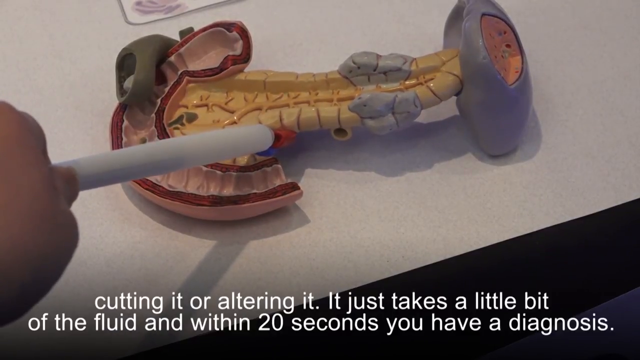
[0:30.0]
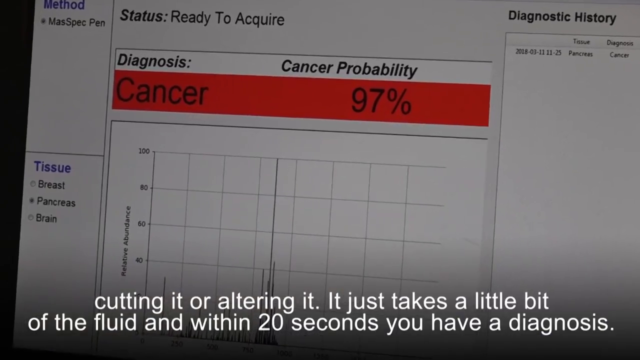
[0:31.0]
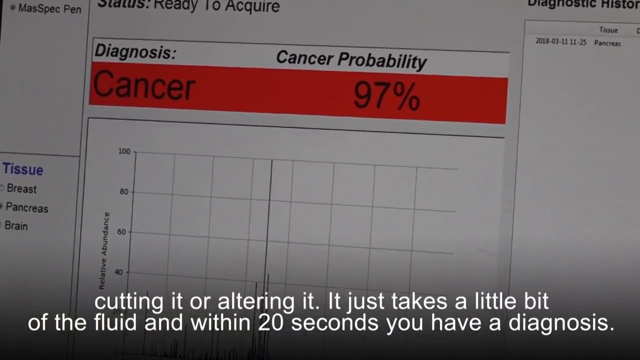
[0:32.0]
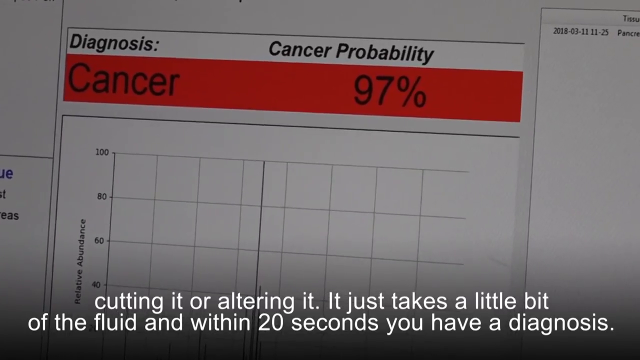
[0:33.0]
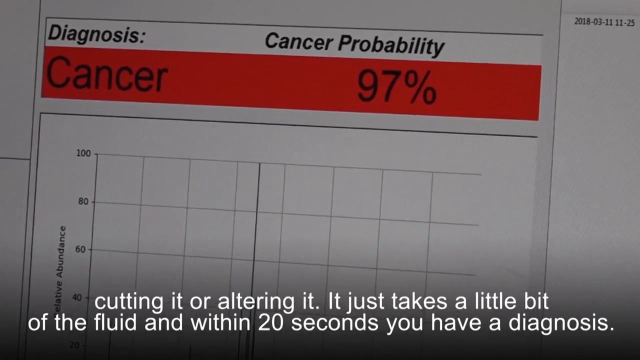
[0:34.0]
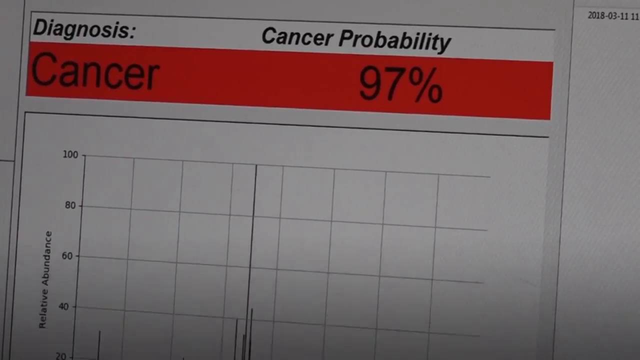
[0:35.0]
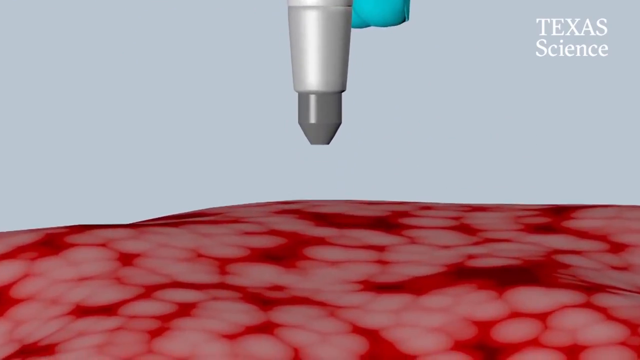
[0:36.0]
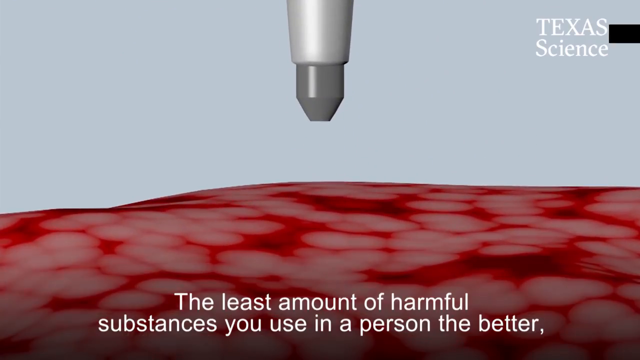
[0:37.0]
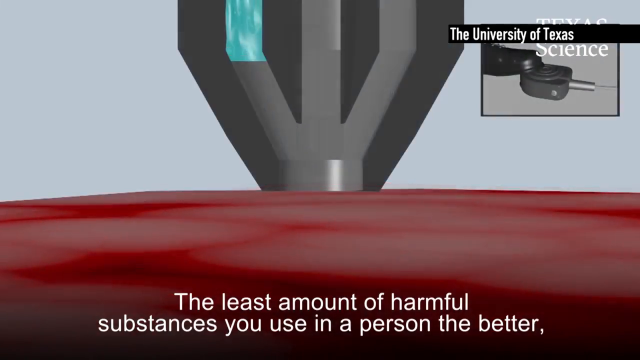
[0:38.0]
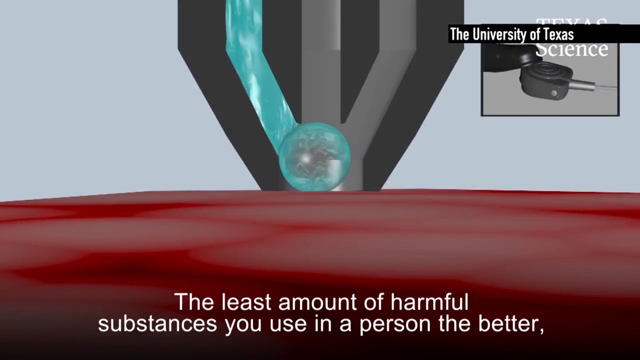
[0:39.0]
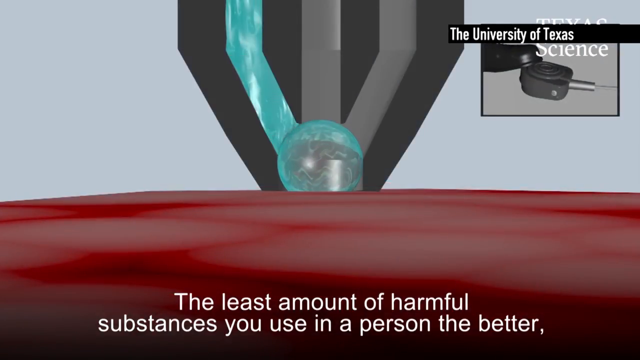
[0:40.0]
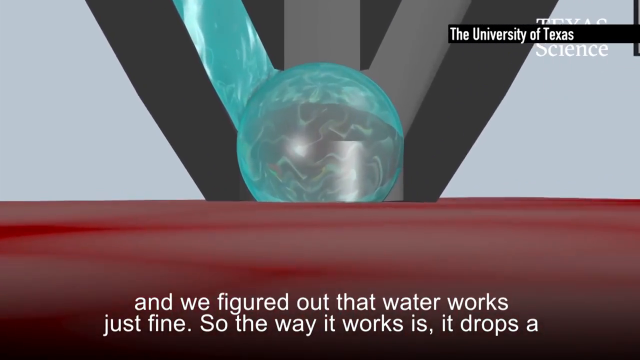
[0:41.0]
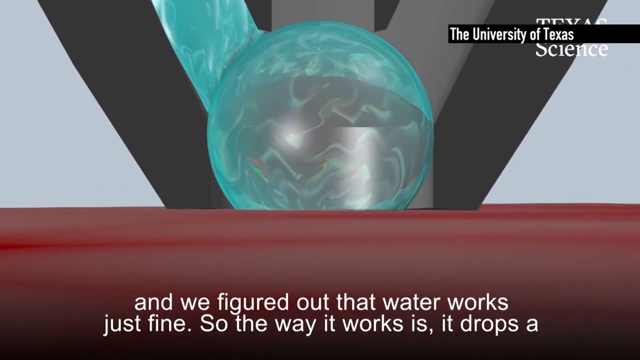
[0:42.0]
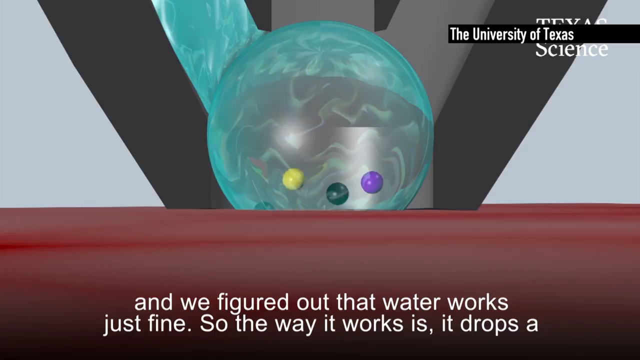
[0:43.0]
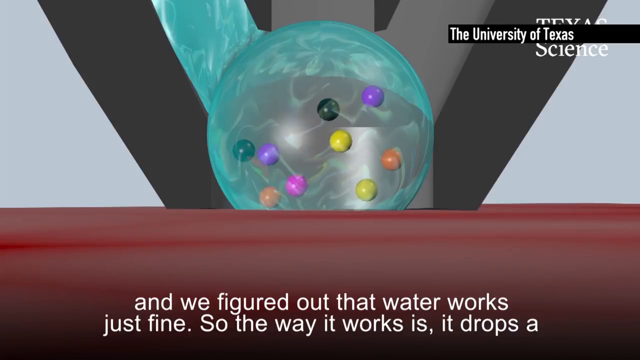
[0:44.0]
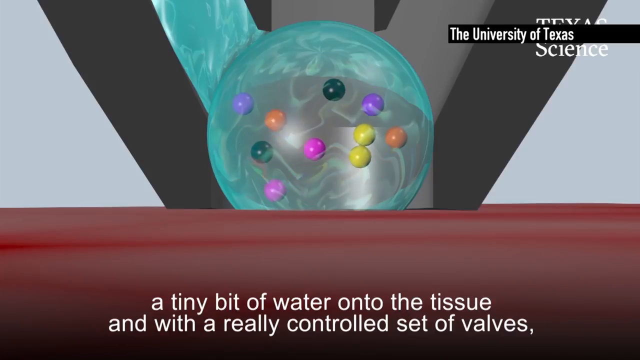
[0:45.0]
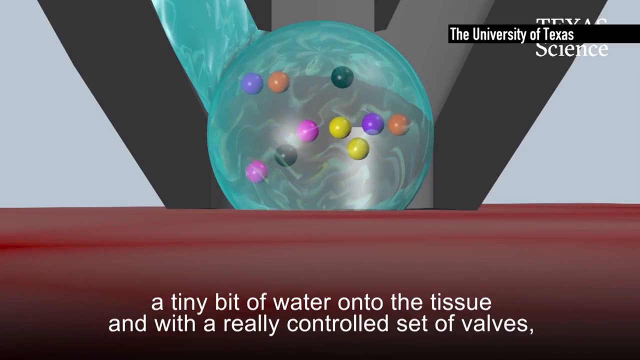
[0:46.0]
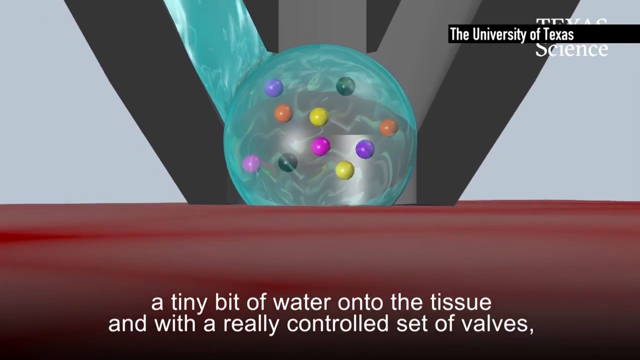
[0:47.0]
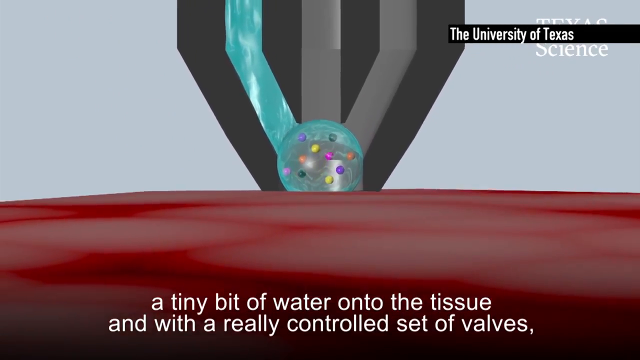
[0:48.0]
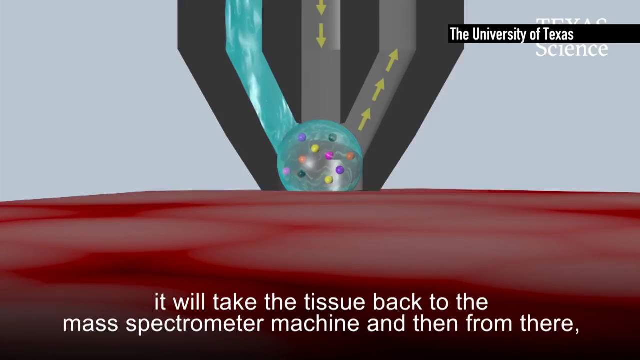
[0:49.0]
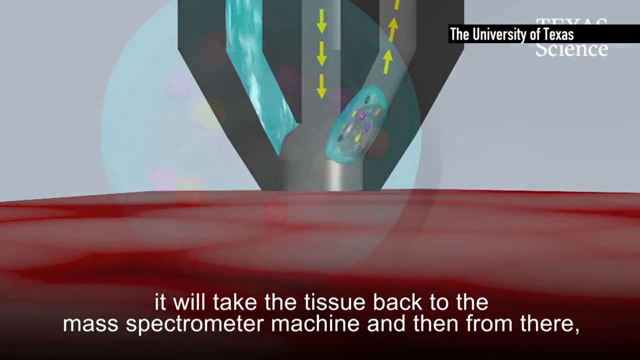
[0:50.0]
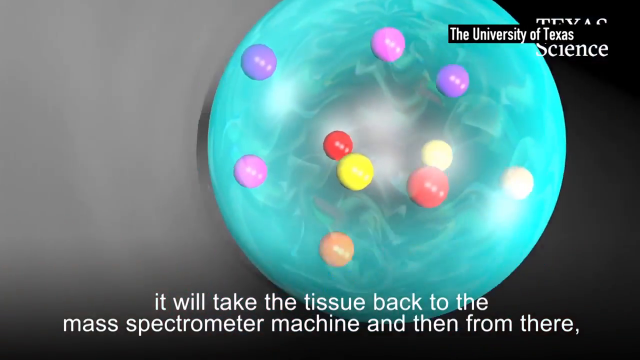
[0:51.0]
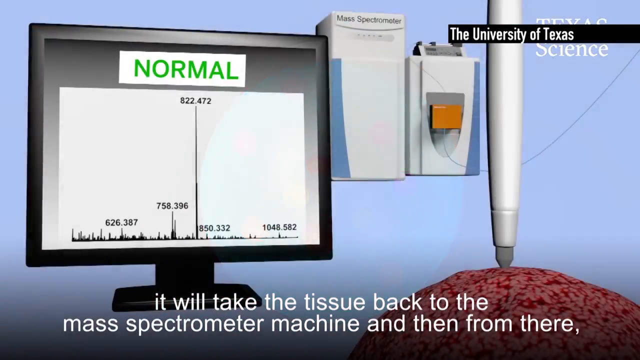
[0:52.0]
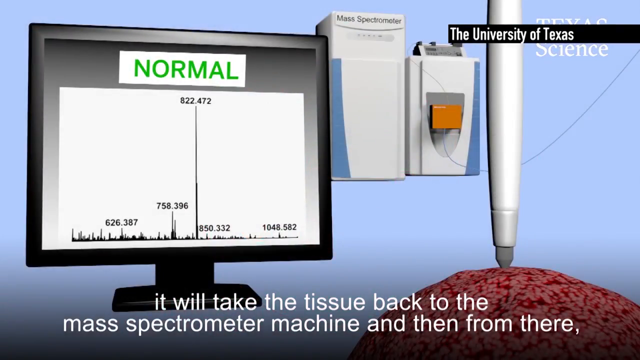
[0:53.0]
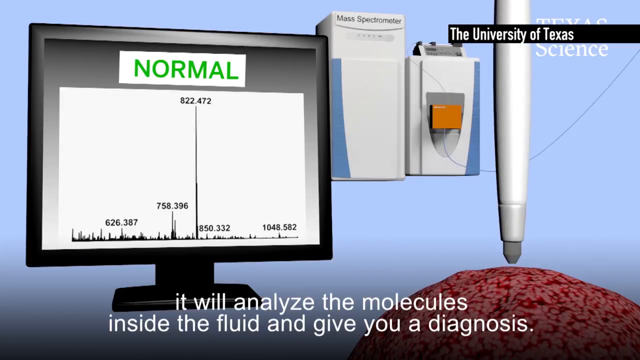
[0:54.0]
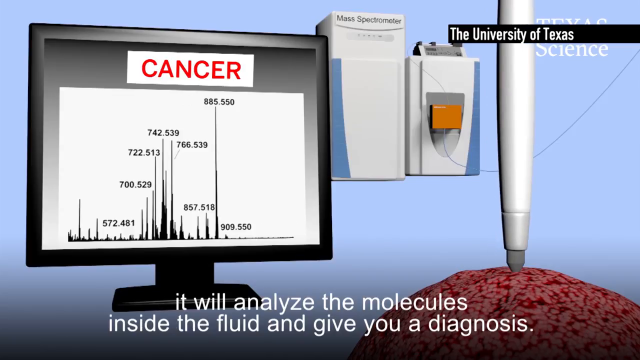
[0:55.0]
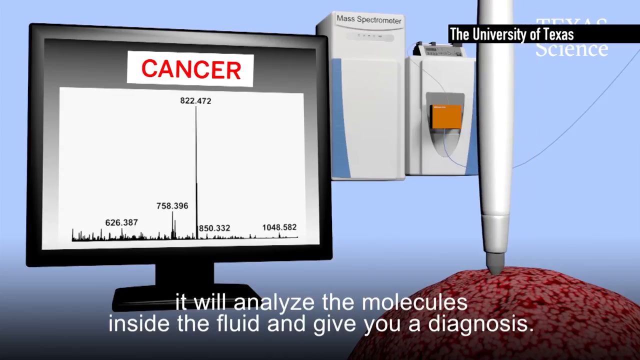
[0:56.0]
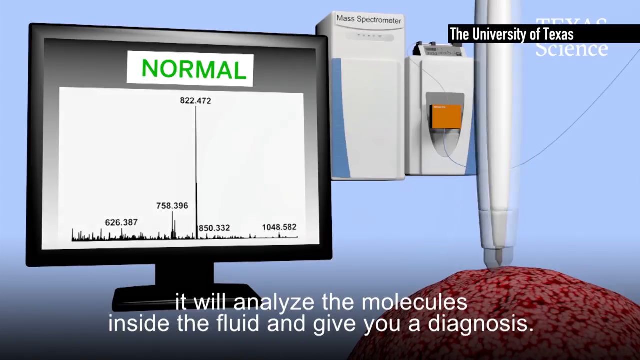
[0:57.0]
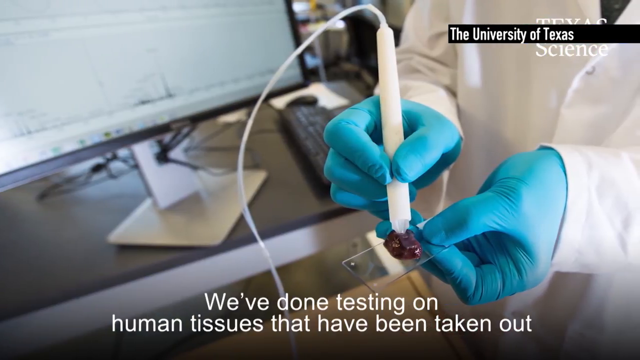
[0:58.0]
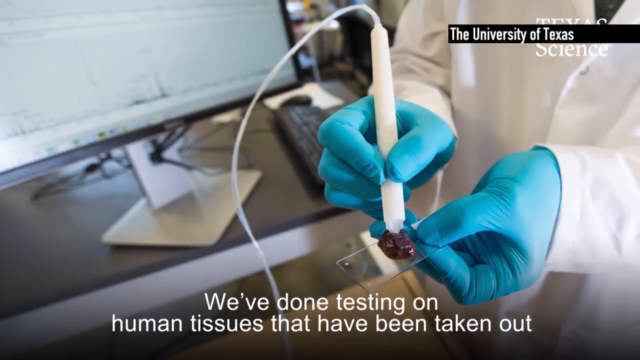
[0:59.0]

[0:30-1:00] A model is shown. A brown person's hand on the left side holds a white pen pointing at a blue and red spot on the model, which also has what looks to be a yellow spine, a grayish purple rounded section at the top and a red and pink rounded end at the bottom; the model is sitting on a white table. White lettering at the bottom reads "cutting it or altering it. It just takes a little bit of the fluid and within 20 seconds you have a diagnosis." Next comes a computer screen with an off-white background. Black lettering at the top right reads "Diagnostic History," with some dates and diagnoses in small text to the right. The center says "Status Ready to Acquire," and below that a white box says "Diagnosis Cancer Probability." A red box says "Cancer, 97%." The bottom section has the Relative Abundance chart, with numbers running downwards from the top reading "180, 60, 40, 20" and square gray boxes to the right. Toward the top left, blue text says "Method," black text below says "Mass Spec Pen," below that blue text reads "Tissue," and black text below reads "Breast, Pancreas, Brain." Then an artist's drawing of the pen appears: it has a black tip, and the person holding the white pen wears blue gloves. Below are pink circles with a red background, and the back wall is light gray. White text at the top right reads "Texas Science." Text added at the bottom reads "the least amount of harmful substances you use in a person the better," and a black strip at the top with white letters says "the University of Texas." Next, a dark gray apparatus is on top of a red and pink surface; it is grey with three lines running up, with darker grey in the background and a teal-colored line on the left that has created a bubble between the red surface and the grey. The white text at the bottom changes to "and we figured out that water works just fine," followed by text beginning "So the way it works is it drops a." Bubbles appear in the teal bubble in purple, yellow, orange, black and green.